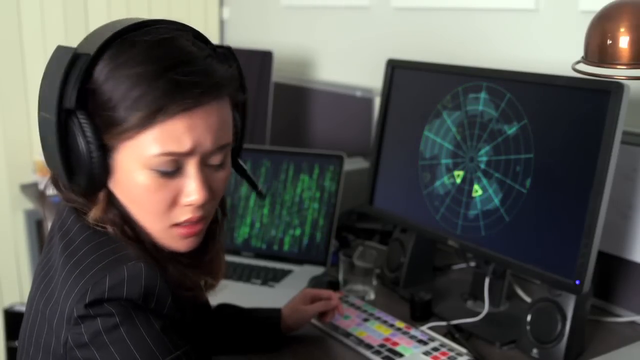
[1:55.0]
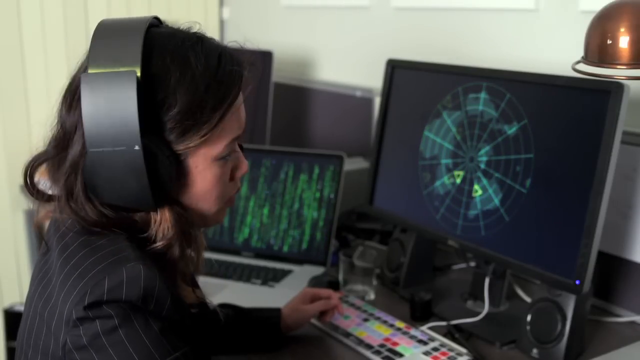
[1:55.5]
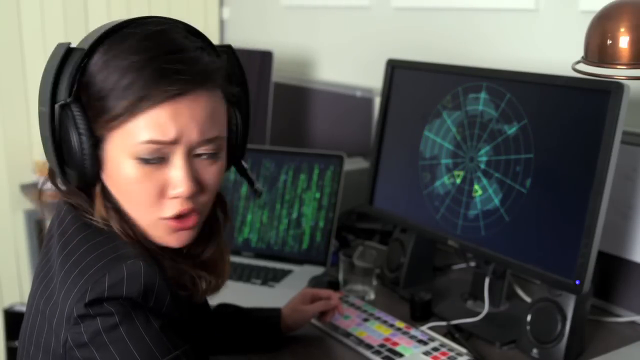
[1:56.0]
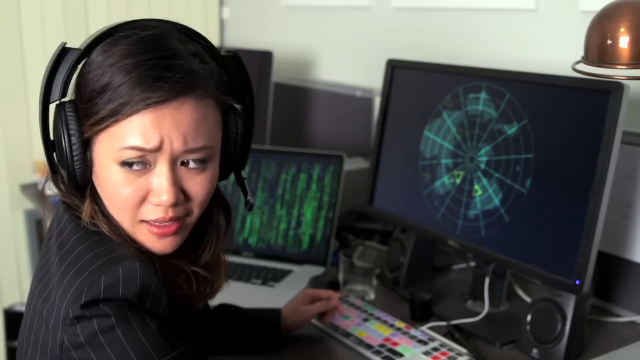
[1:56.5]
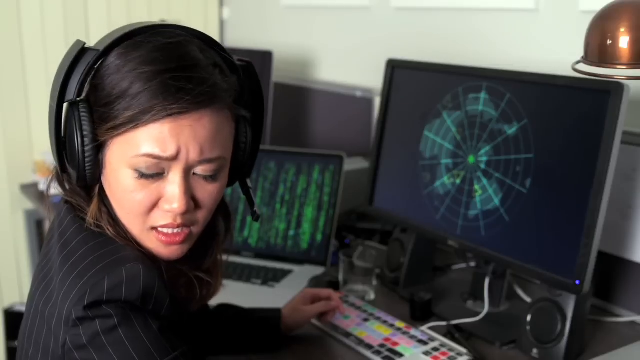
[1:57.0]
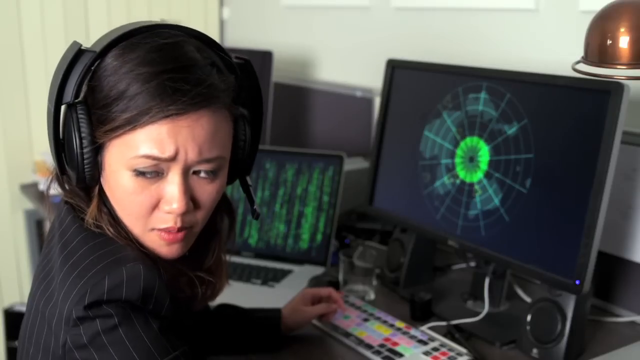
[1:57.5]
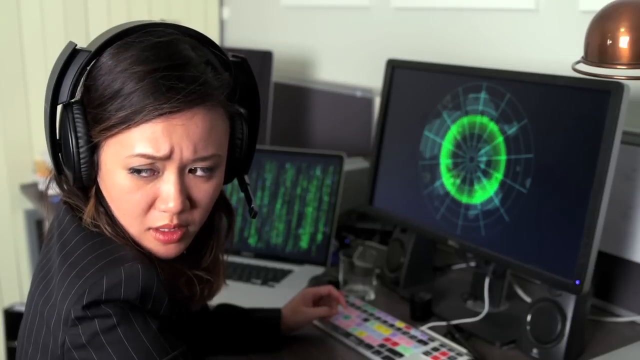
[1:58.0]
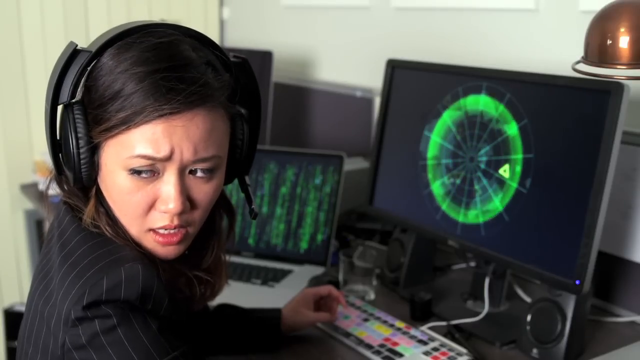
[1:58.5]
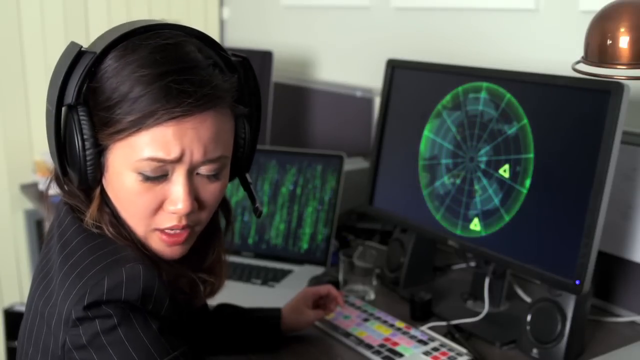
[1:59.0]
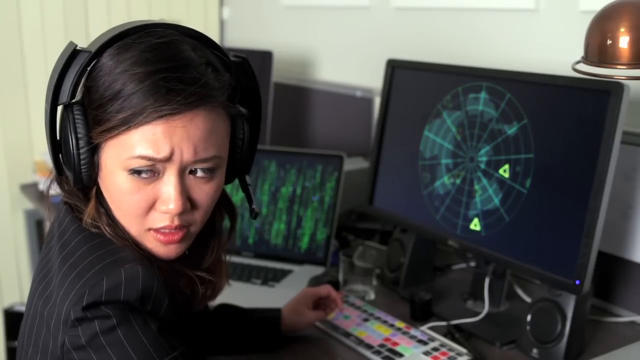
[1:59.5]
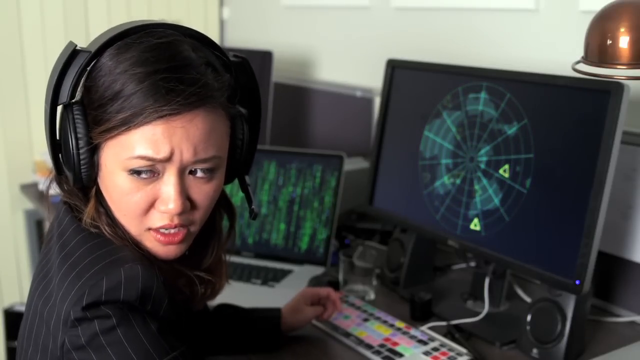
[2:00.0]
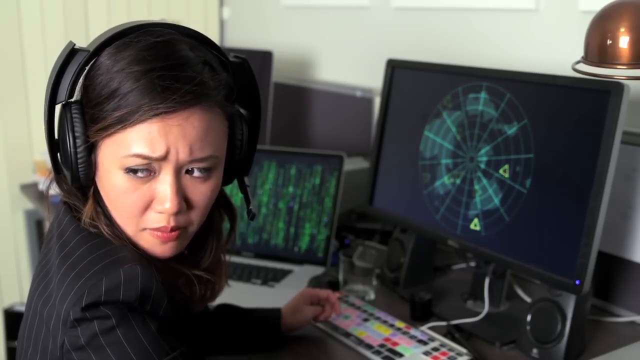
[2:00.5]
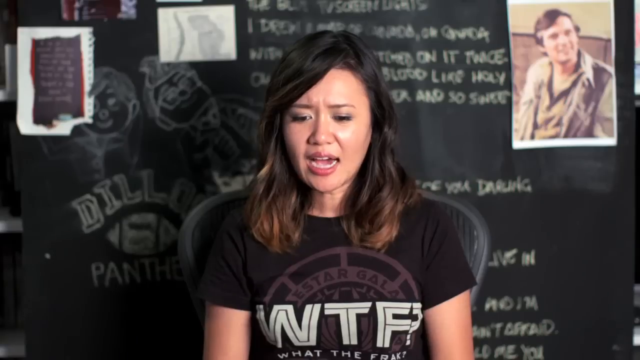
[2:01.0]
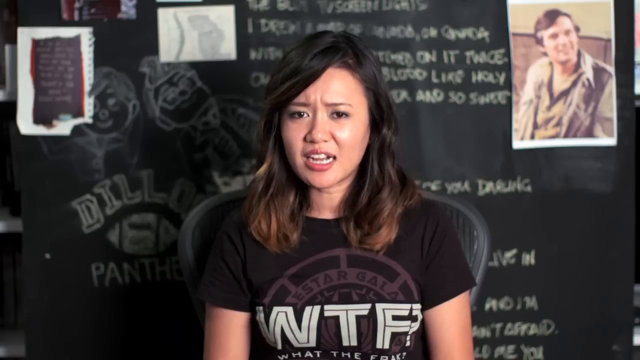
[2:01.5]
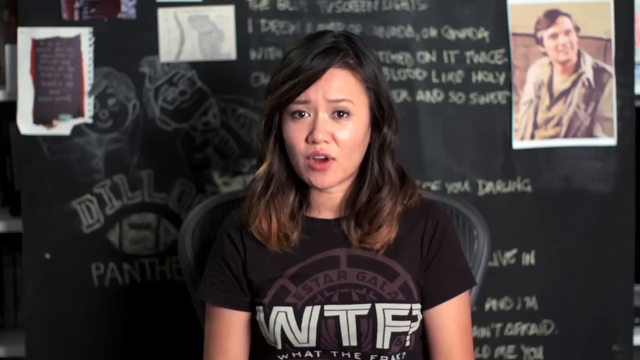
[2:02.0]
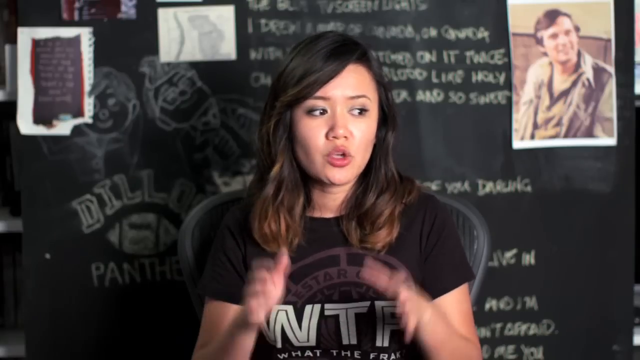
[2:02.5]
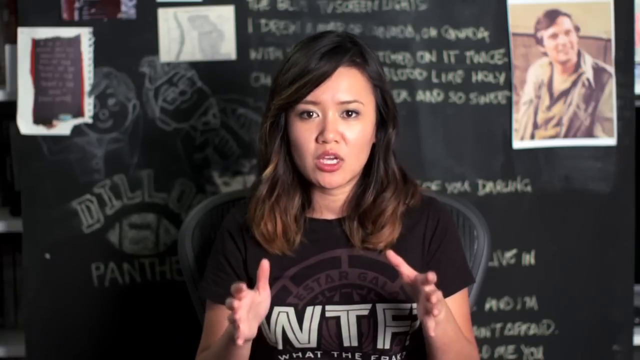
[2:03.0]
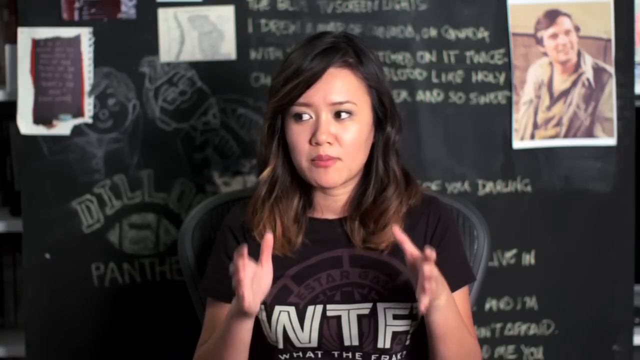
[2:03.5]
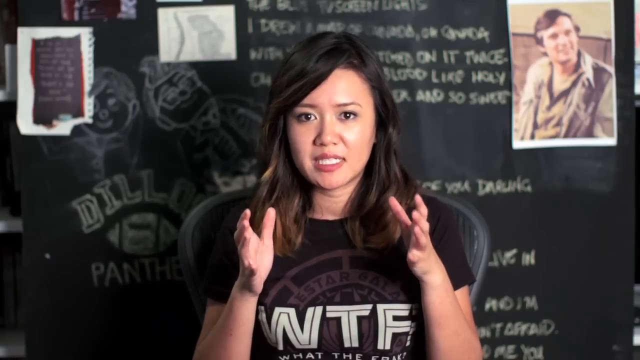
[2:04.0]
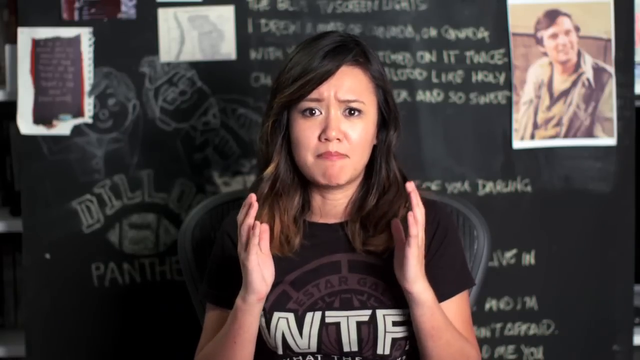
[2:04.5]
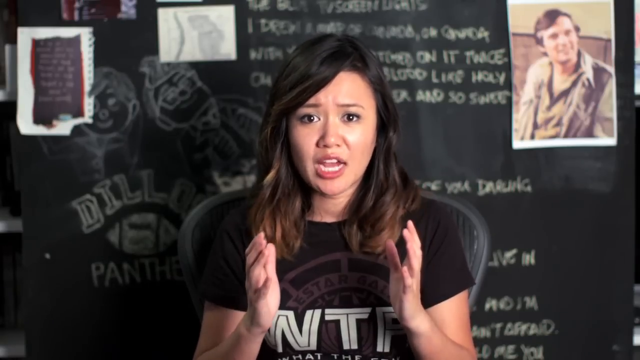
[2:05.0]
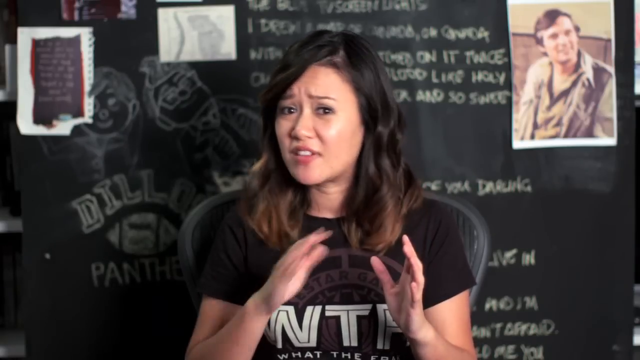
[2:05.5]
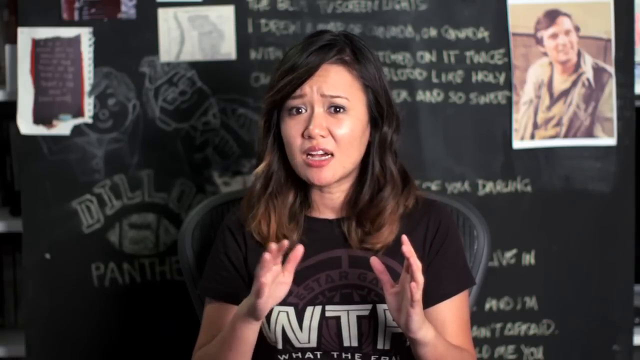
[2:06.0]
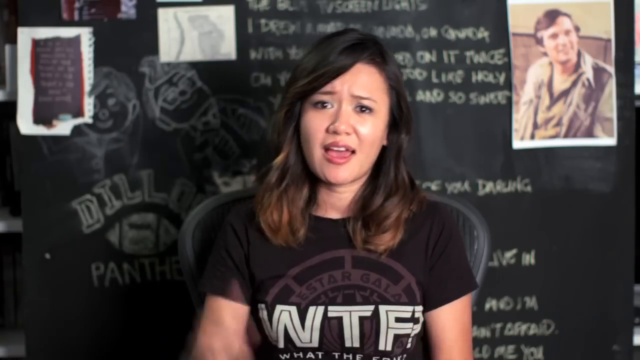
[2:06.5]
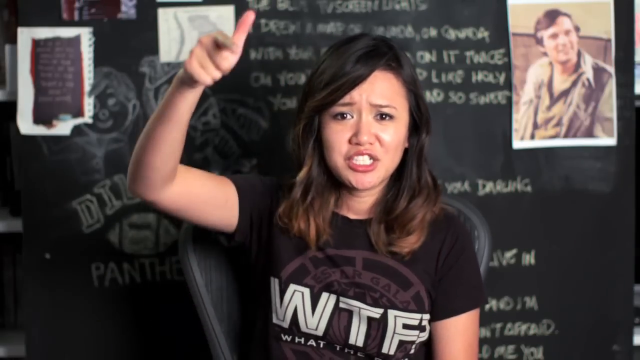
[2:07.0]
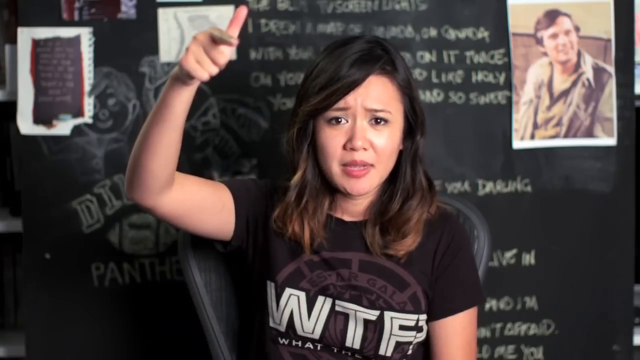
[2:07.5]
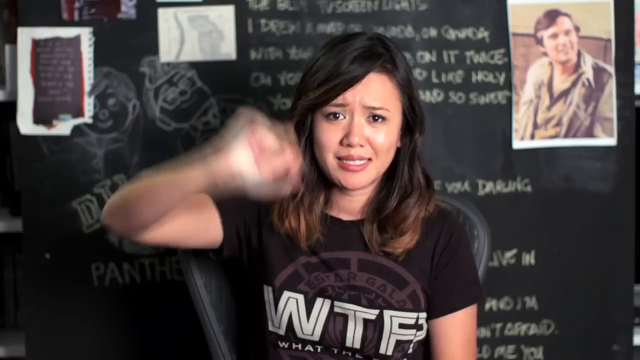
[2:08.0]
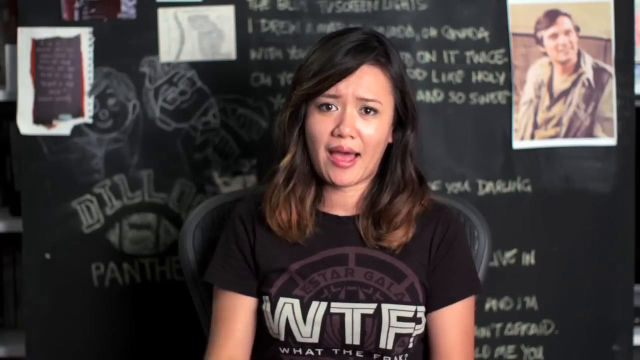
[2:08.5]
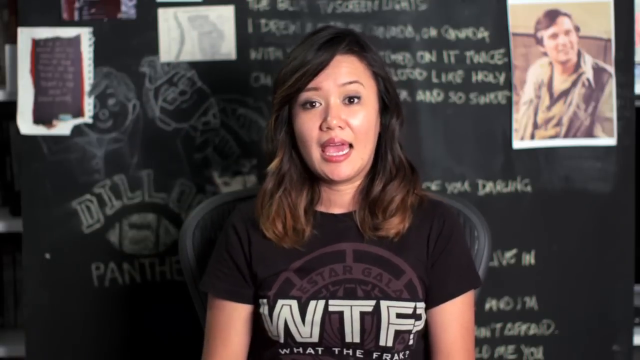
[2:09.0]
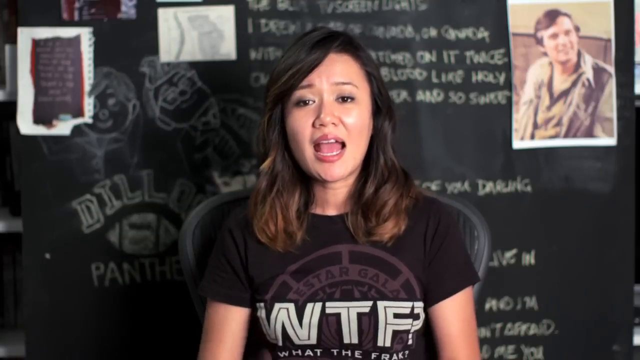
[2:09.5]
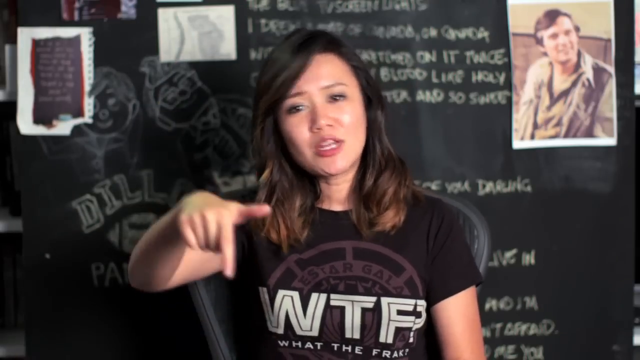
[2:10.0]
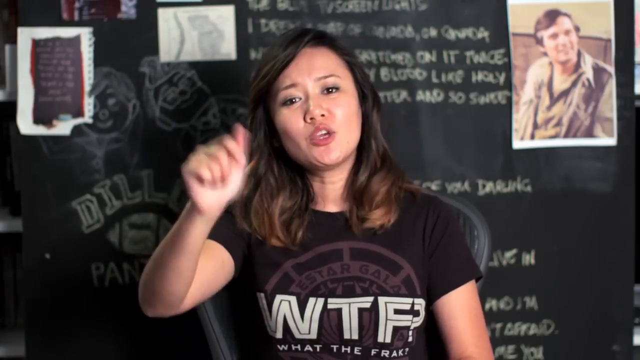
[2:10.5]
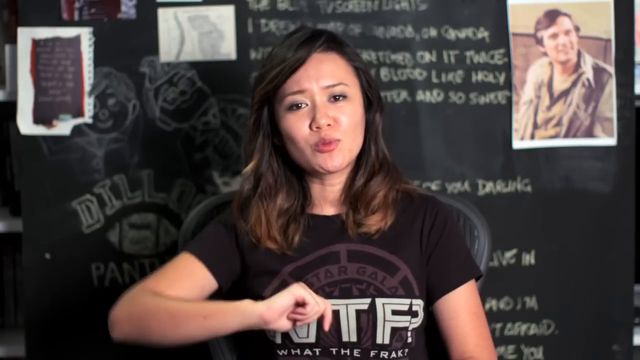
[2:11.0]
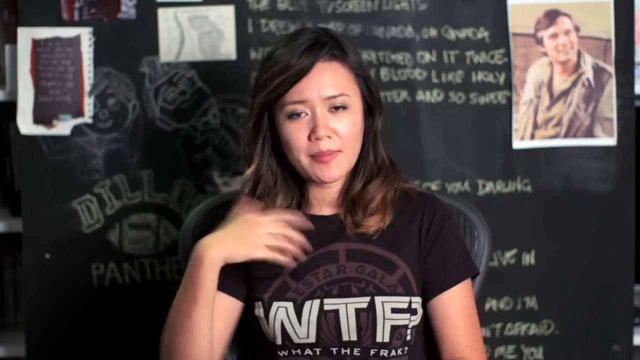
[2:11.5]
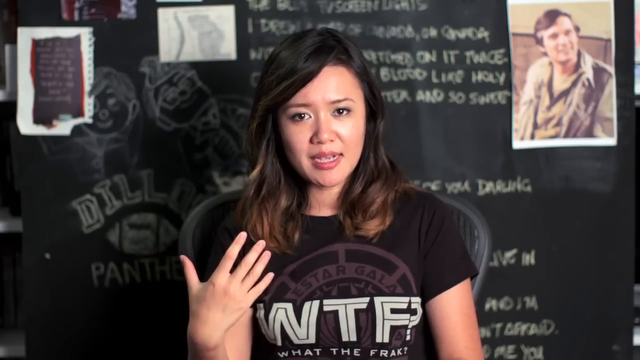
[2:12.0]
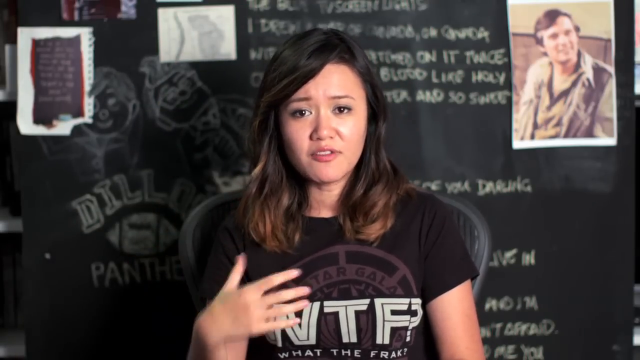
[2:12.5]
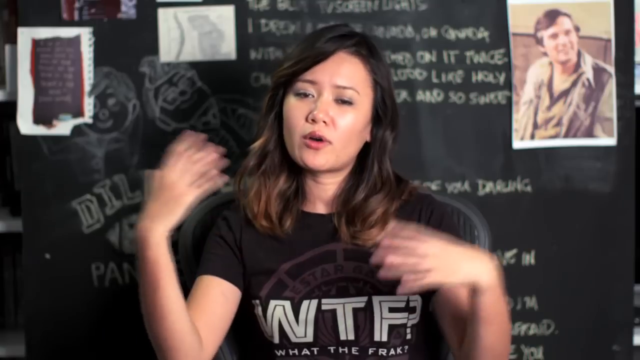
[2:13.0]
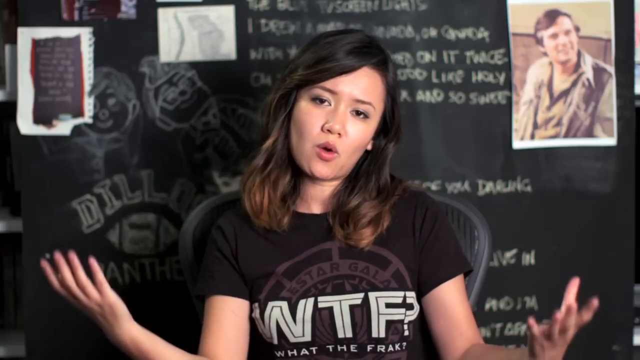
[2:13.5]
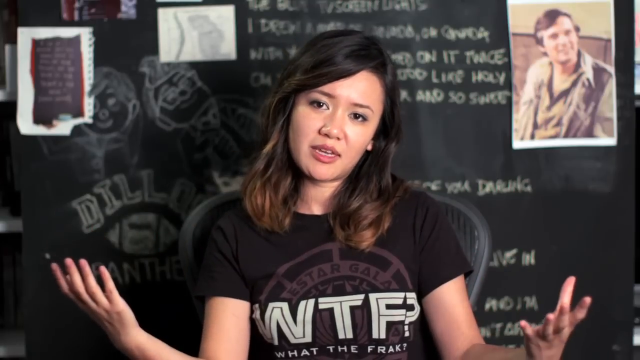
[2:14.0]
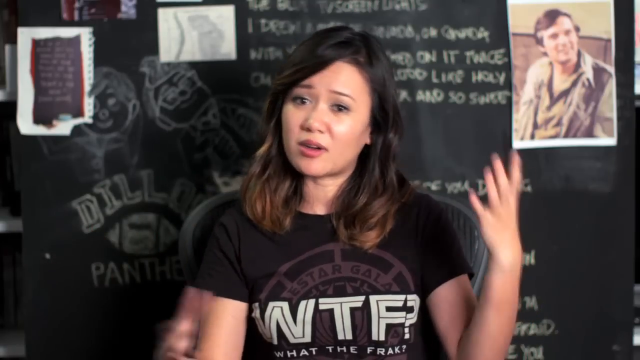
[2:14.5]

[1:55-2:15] The girl with the headphones moves her head back and forth between the computer screen and looking back, talking while she does so. The girl in the WTF t-shirt talks, using her hands a lot, kind of pointing down, and her arms kind of go over. The screen kind of behind the headphone girl's head has what look like green lines or numbers, hard to see; the green numbers on the lower computer screen, partially behind her head, look like they keep moving. Her eyebrows are still sort of moved together as if she is frustrated. The shots repeat over and over between the girl in the WTF shirt pointing and talking with her hands and the girl at the computer.